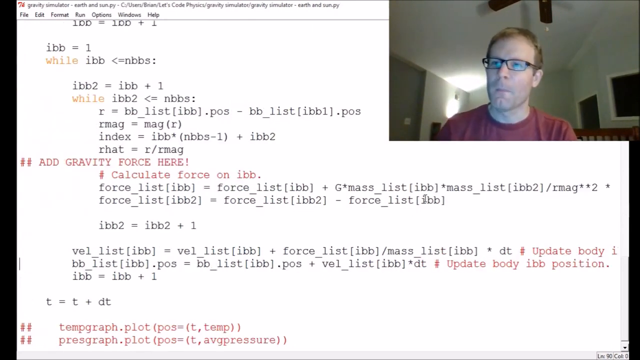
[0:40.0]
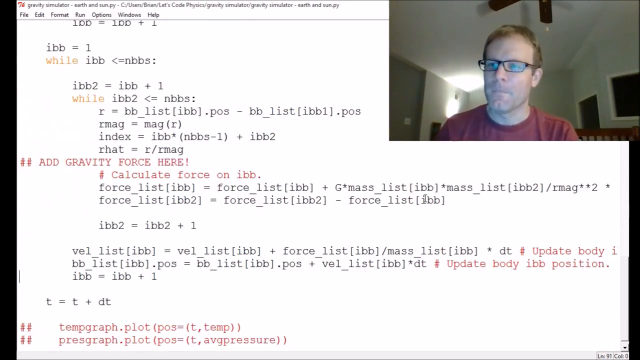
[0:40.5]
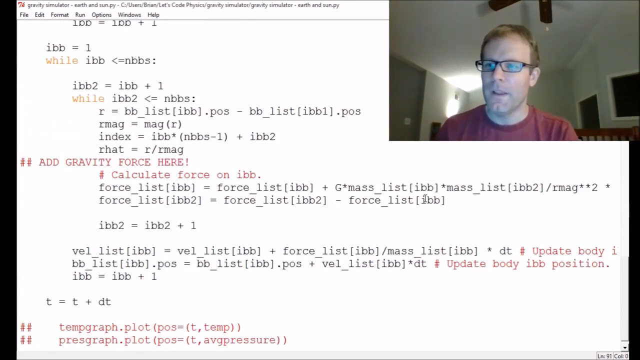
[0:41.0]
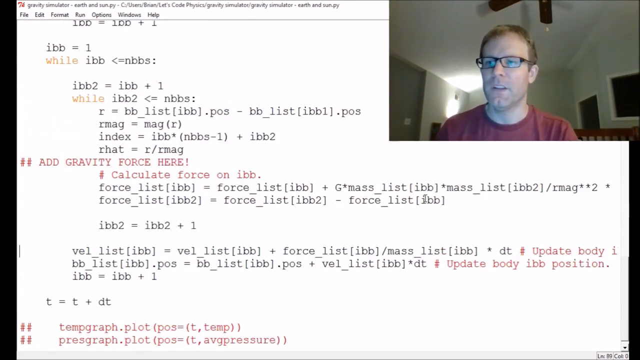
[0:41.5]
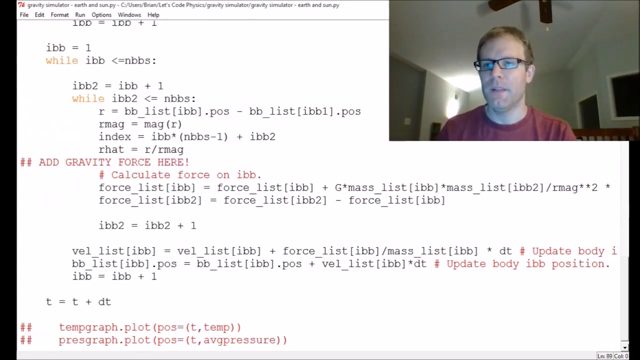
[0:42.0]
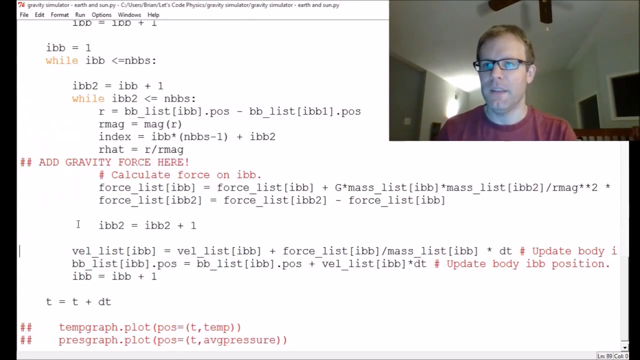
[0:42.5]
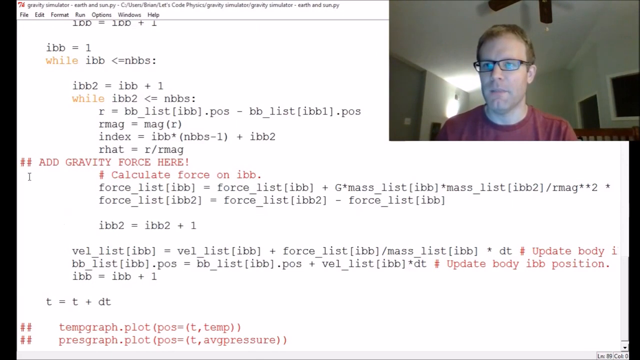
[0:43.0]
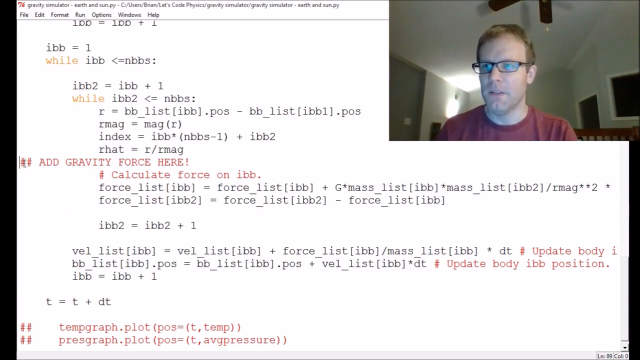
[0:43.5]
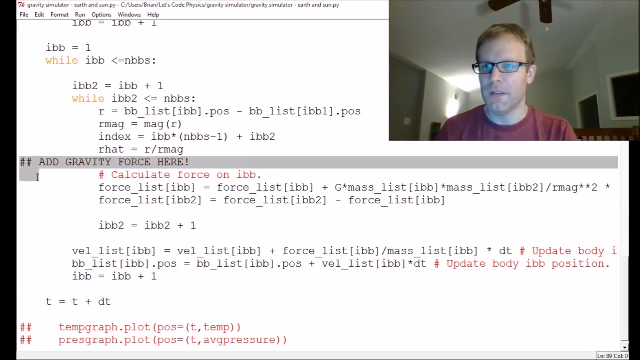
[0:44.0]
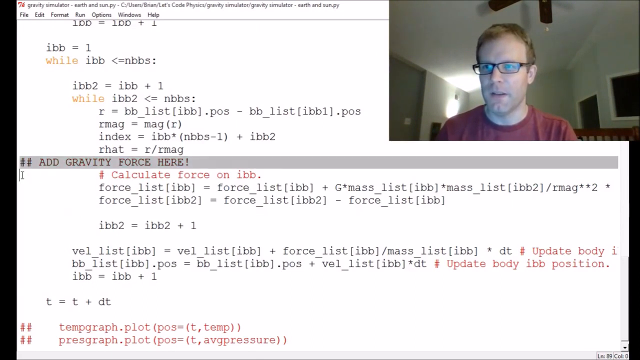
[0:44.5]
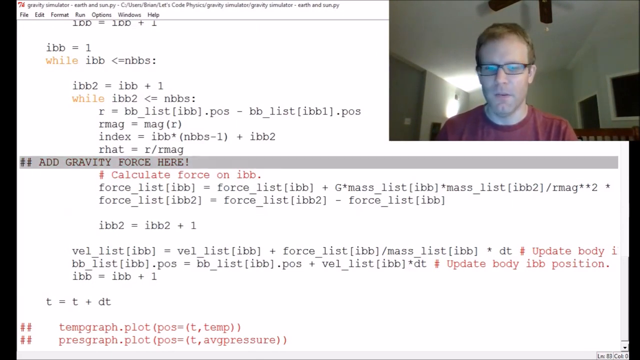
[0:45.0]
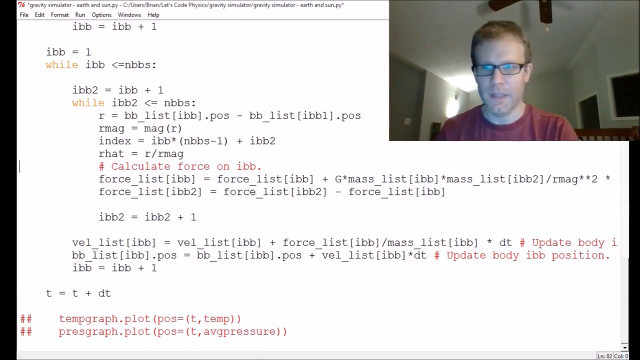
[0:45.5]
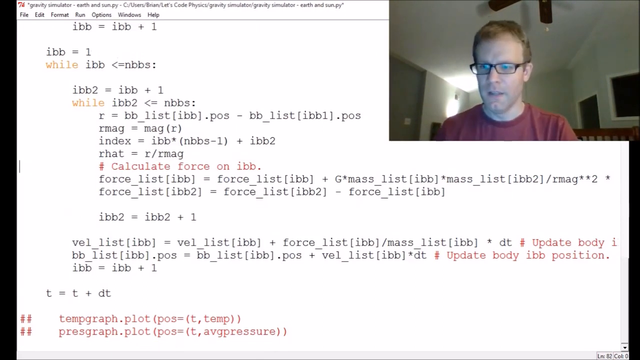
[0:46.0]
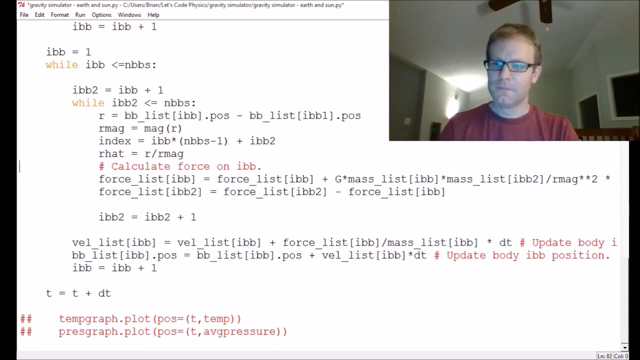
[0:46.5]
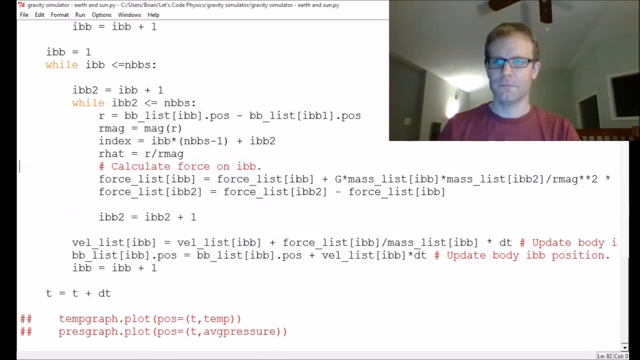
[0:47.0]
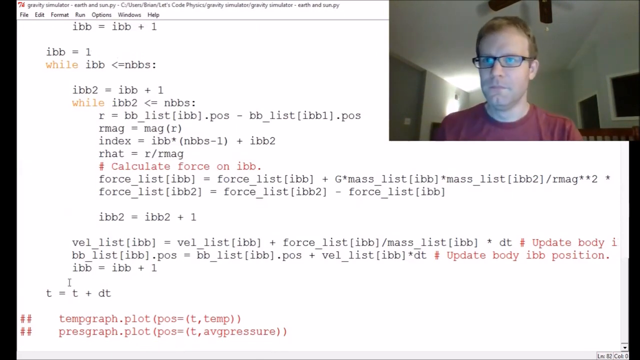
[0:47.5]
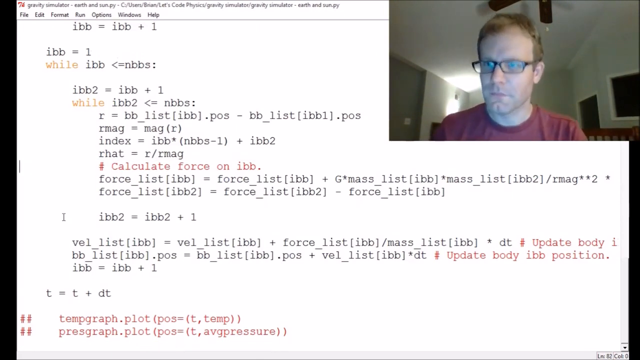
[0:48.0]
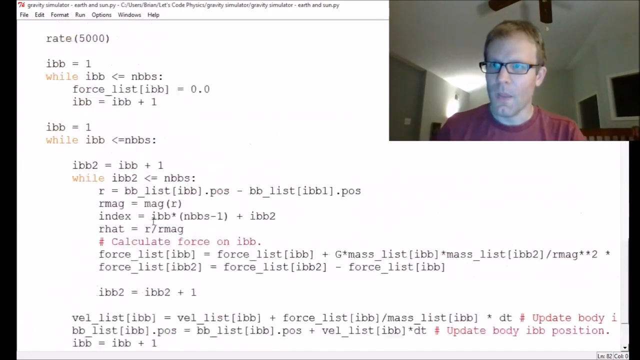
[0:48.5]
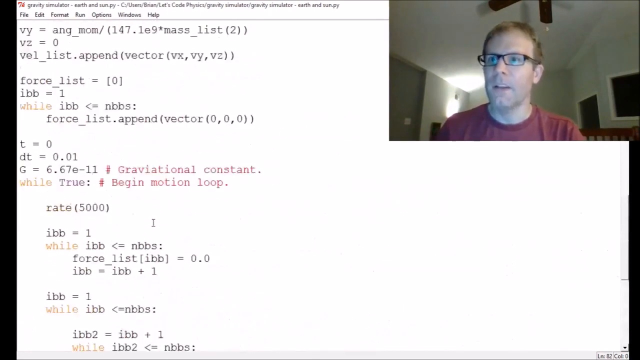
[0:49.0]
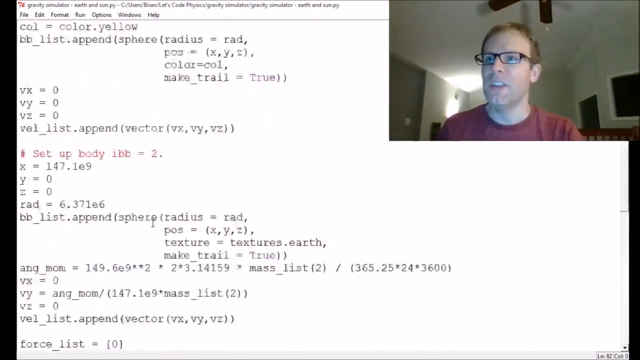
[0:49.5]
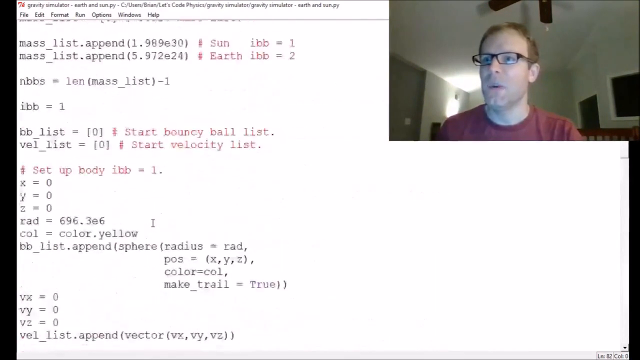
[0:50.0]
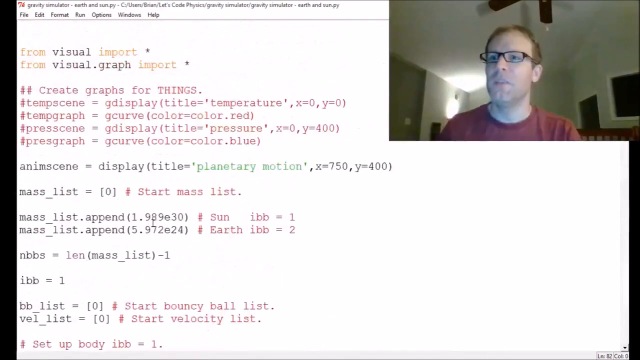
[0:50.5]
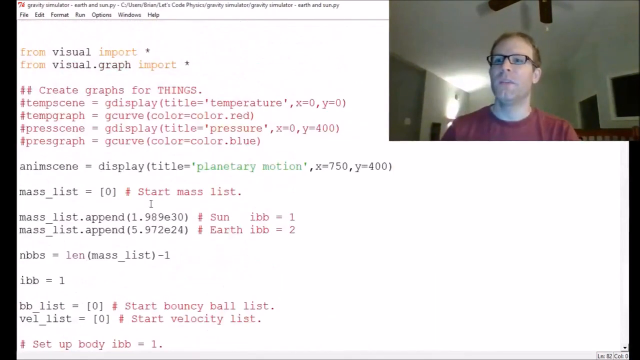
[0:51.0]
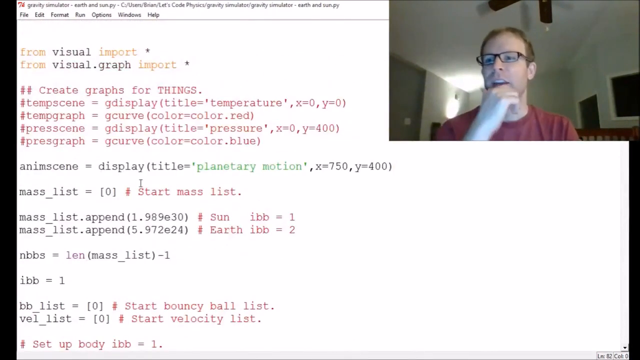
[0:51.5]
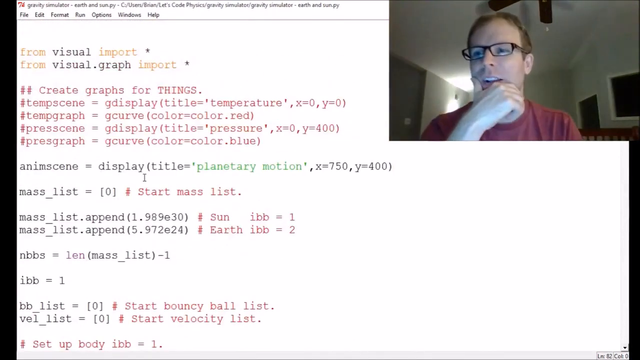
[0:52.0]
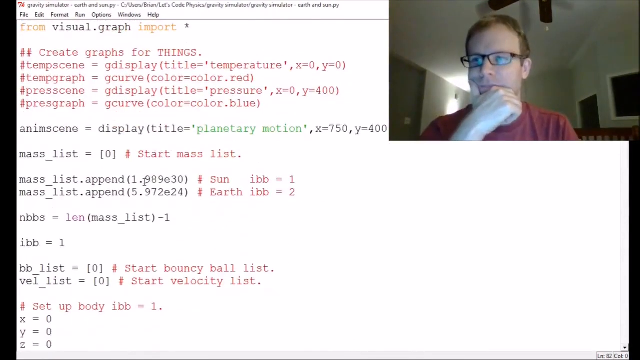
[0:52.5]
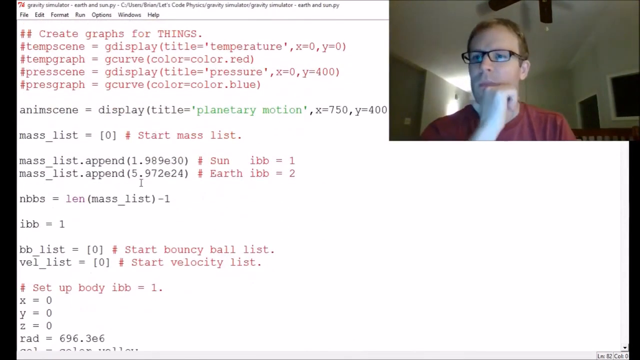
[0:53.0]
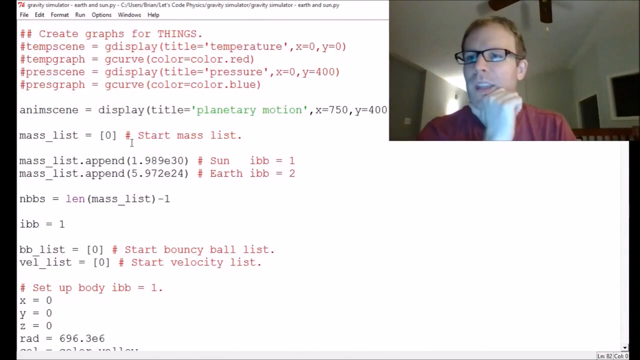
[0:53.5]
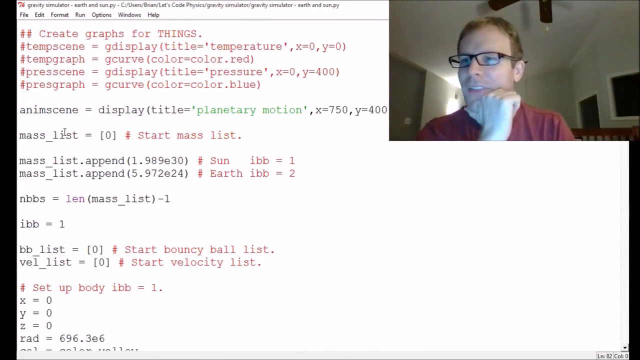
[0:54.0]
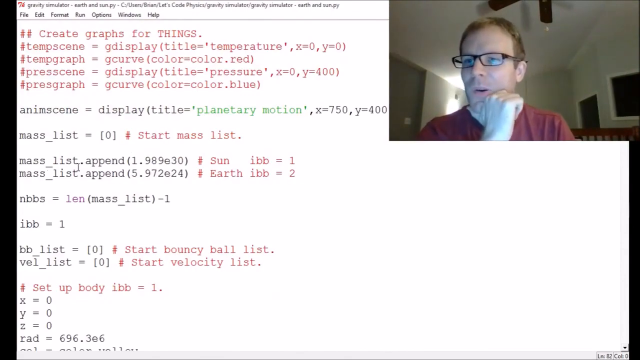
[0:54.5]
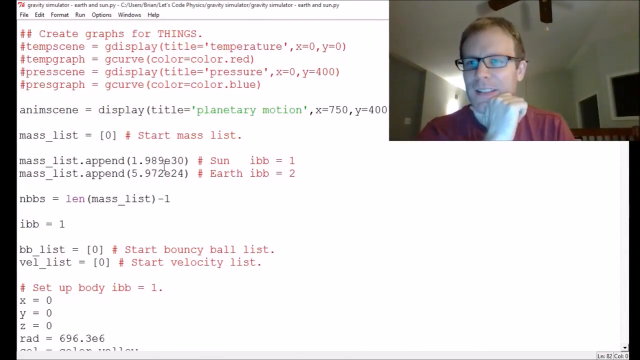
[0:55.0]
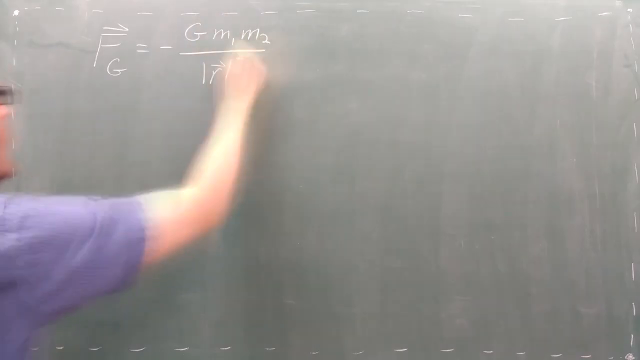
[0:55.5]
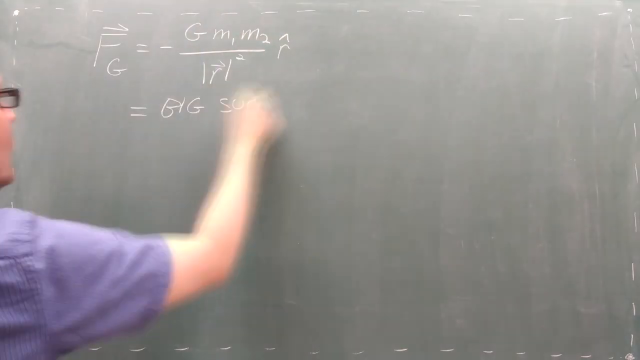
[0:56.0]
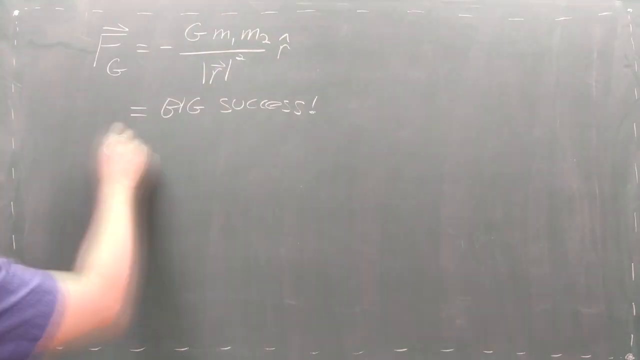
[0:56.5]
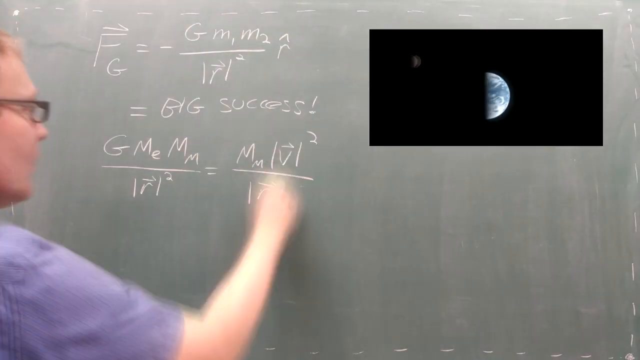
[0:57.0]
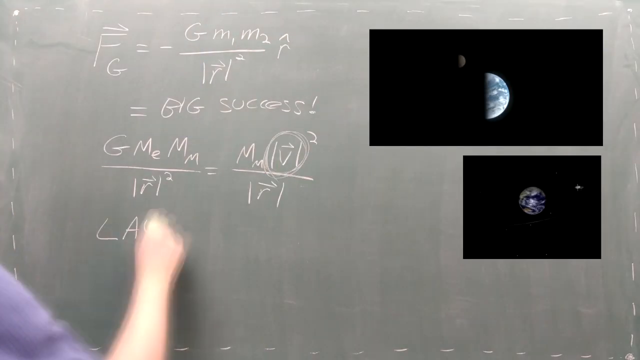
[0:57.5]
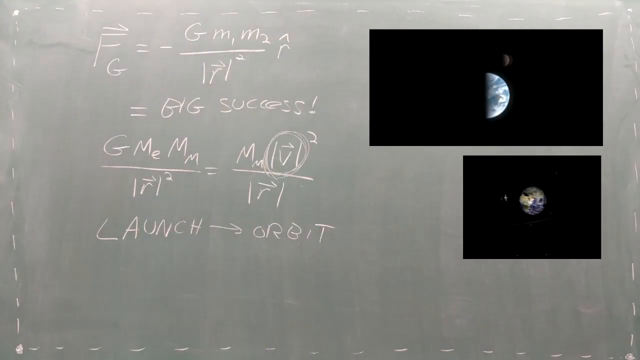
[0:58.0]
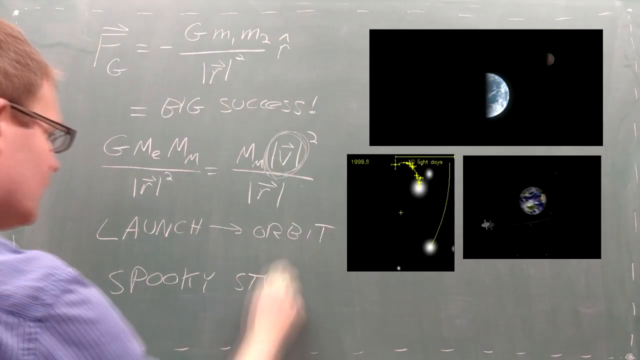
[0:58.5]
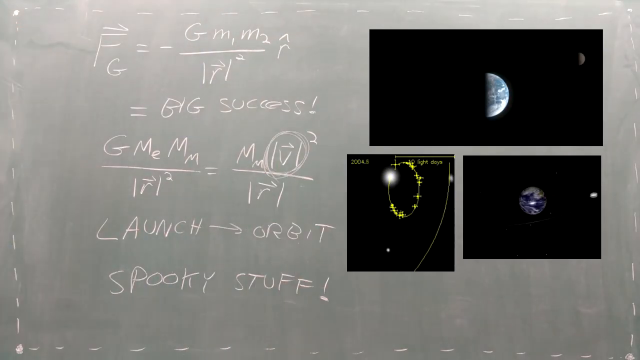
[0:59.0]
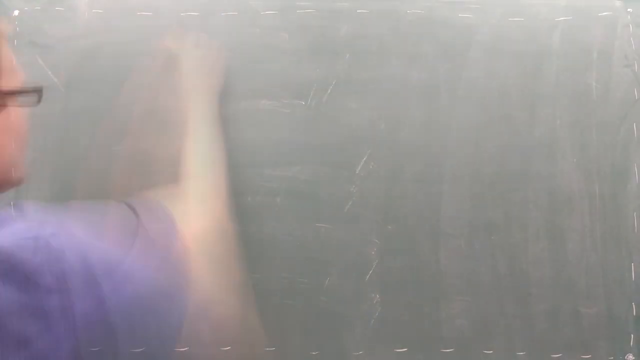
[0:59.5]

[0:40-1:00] A Caucasian man with glasses and a red shirt appears to be giving a presentation, with himself visible on a webcam in the right-hand corner of the screen. He is entering code, apparently for a solar system. Part of the code reads "gravity force here", along with some calculations. He focuses on that part and seems to delete it, apparently because it is a comment, leaving only the code. He scrolls all the way up to the beginning of the code, then scrolls down and focuses on some information. He then returns to the blackboard and writes a formula: a capital F with a G under it, equal to G M, G M 2 over one R one squared, with R next to it, and this equals "big success". Another equation reads G M E M M over one R one squared equals M M L V L squared over one R one, and he writes "lost orbit" over it. Images of the Earth circling are shown, he writes spooky stuff below it, and then he erases everything on the board.